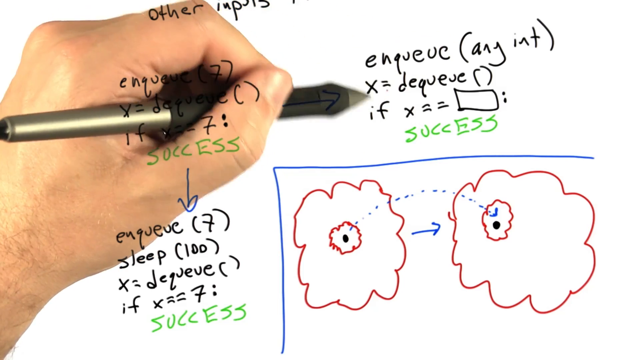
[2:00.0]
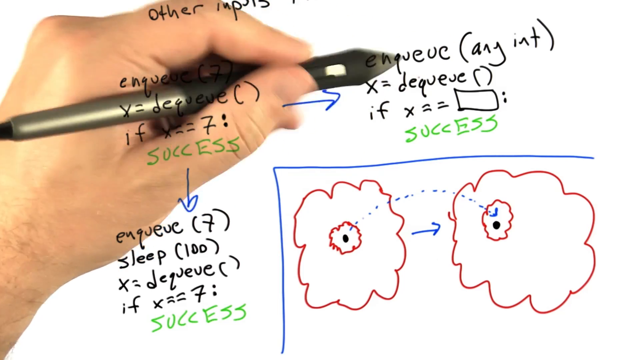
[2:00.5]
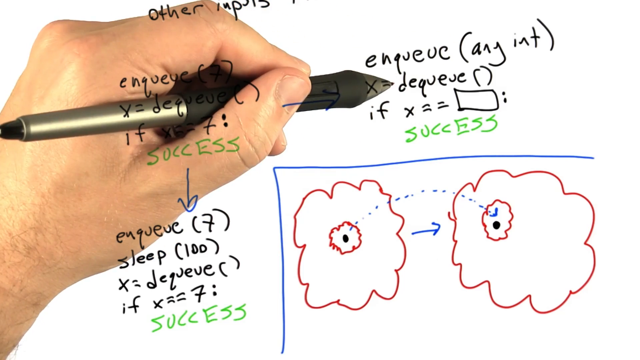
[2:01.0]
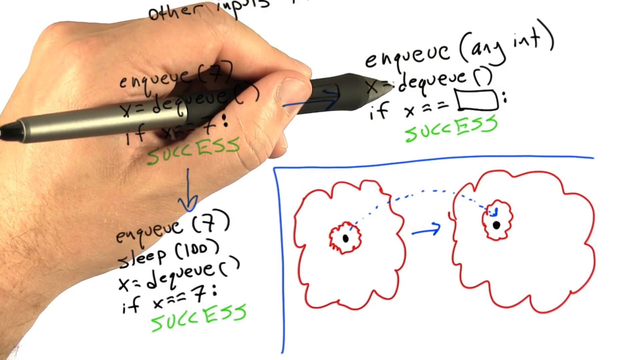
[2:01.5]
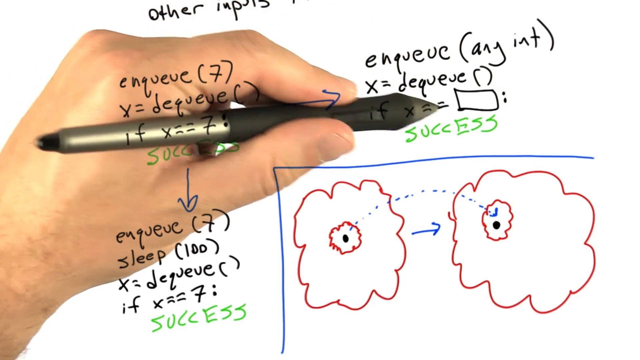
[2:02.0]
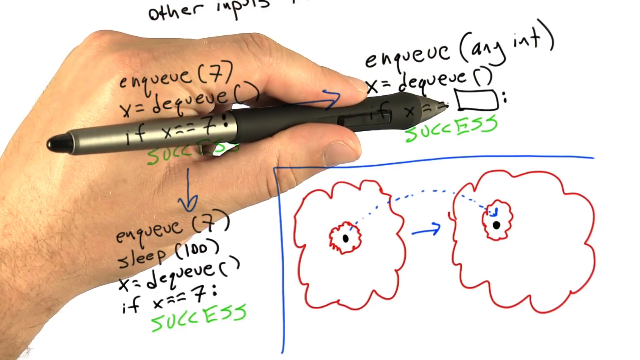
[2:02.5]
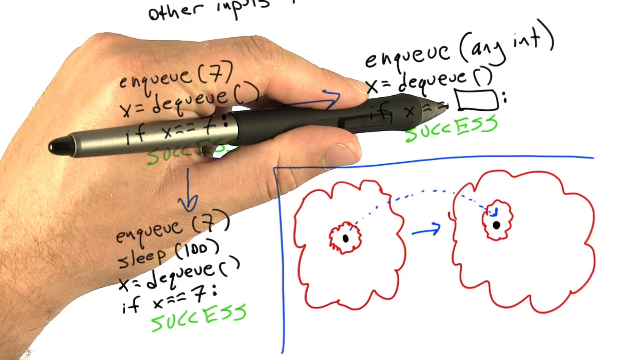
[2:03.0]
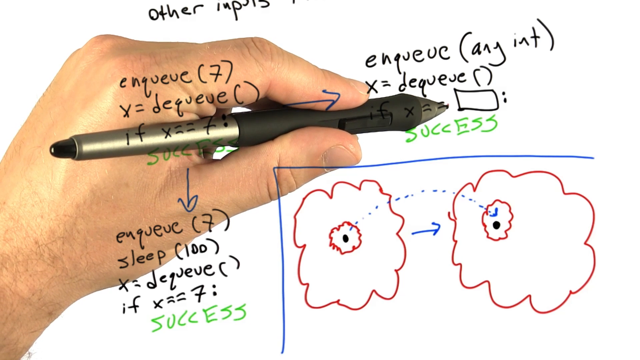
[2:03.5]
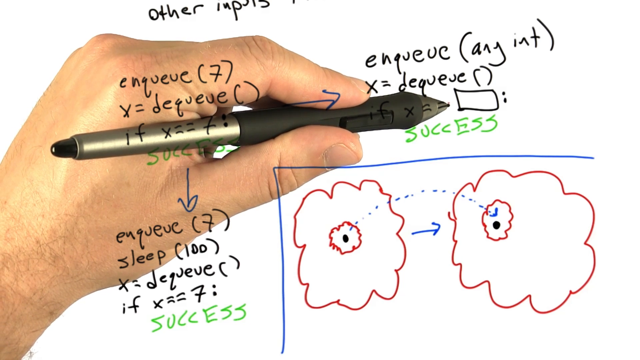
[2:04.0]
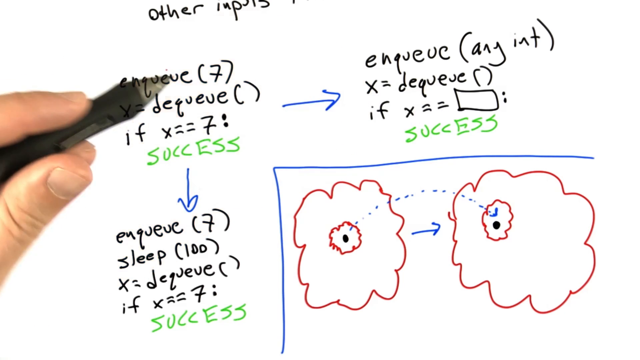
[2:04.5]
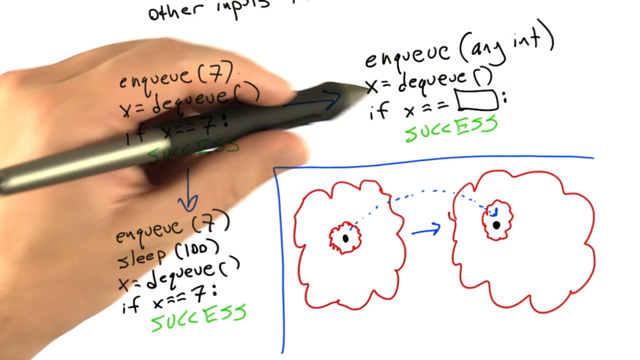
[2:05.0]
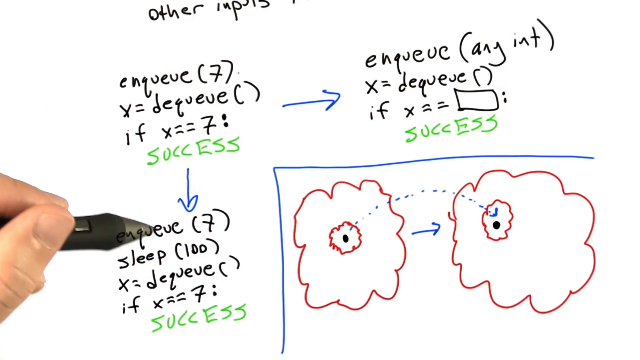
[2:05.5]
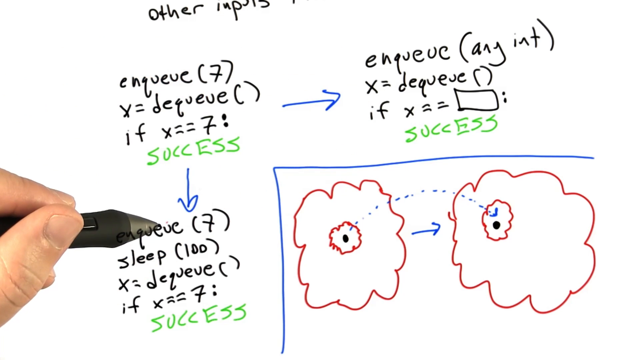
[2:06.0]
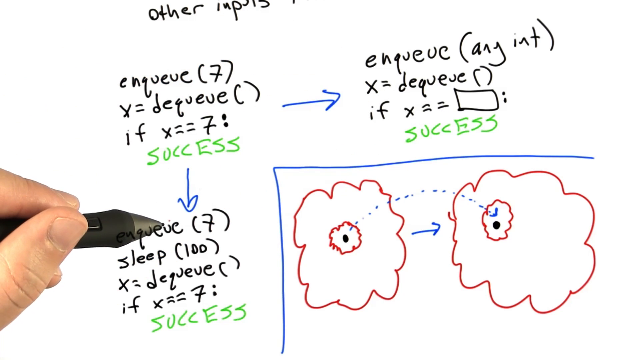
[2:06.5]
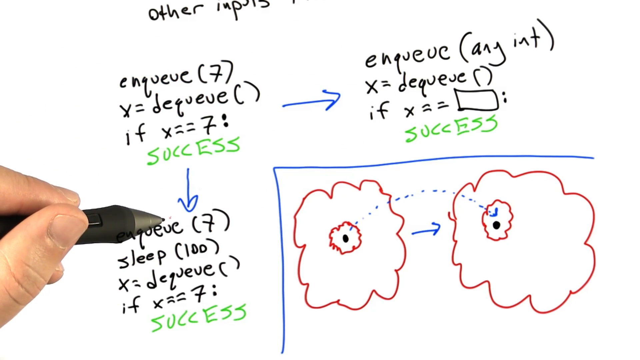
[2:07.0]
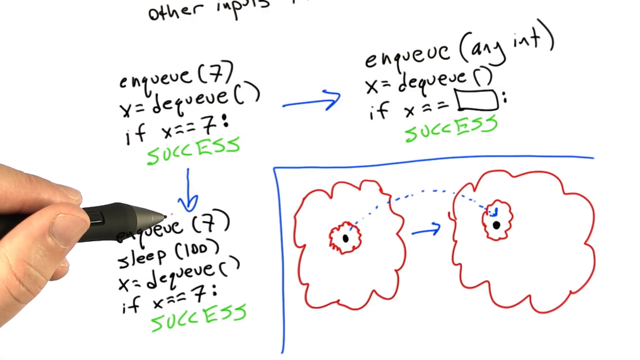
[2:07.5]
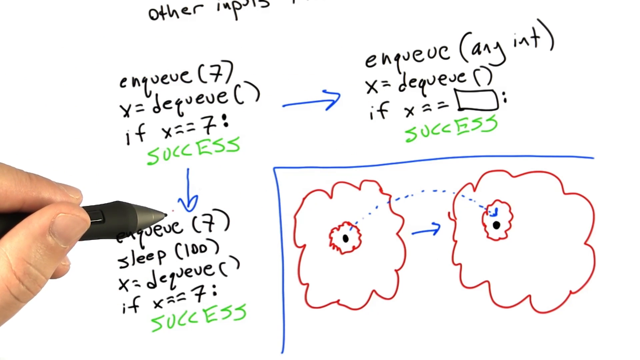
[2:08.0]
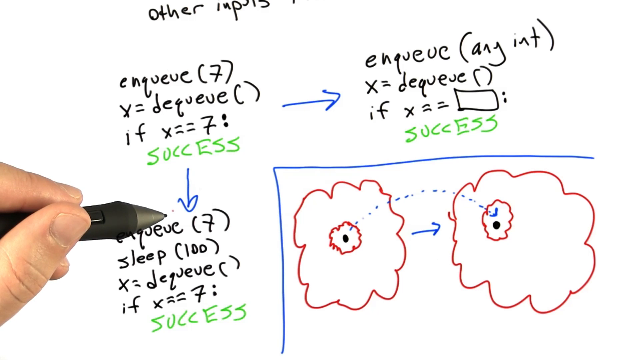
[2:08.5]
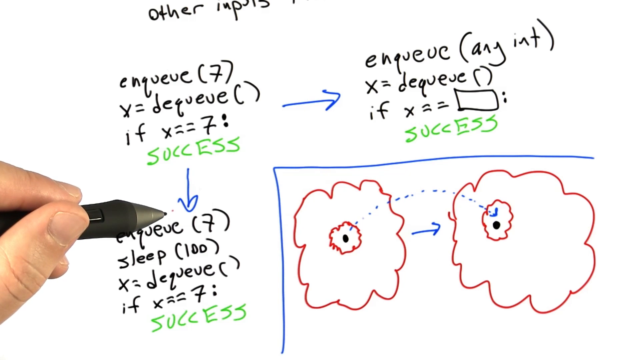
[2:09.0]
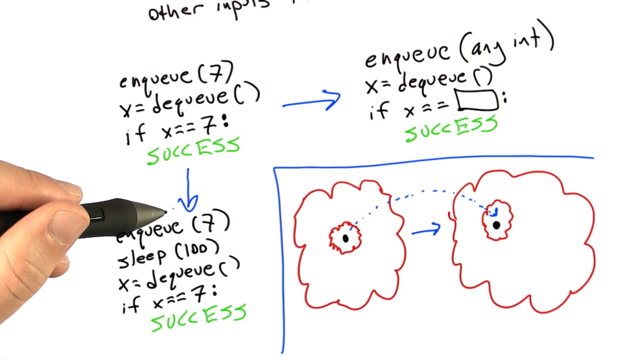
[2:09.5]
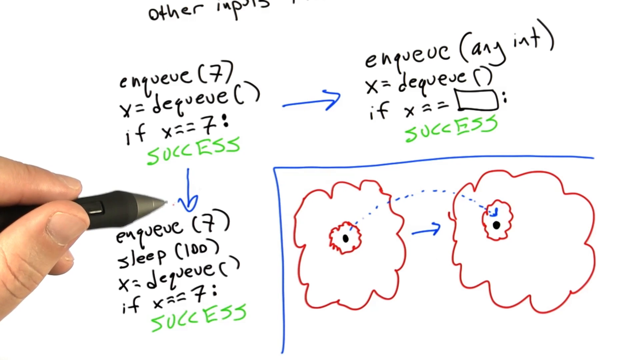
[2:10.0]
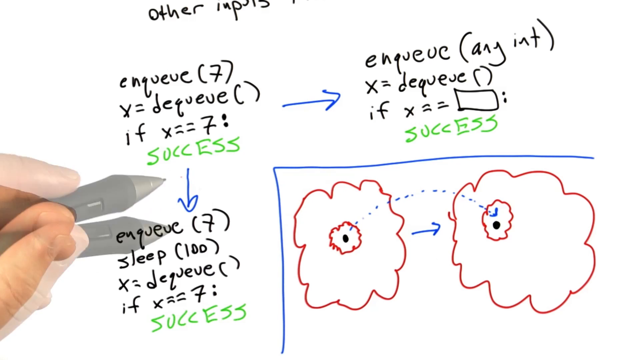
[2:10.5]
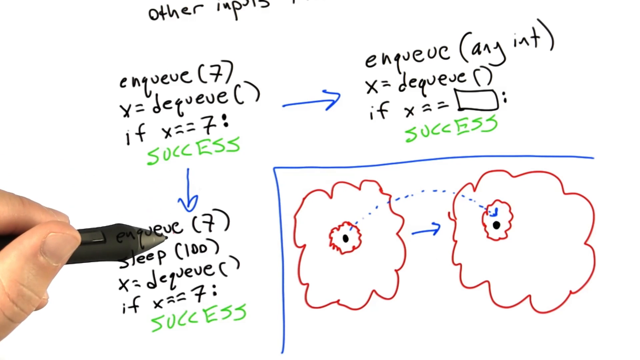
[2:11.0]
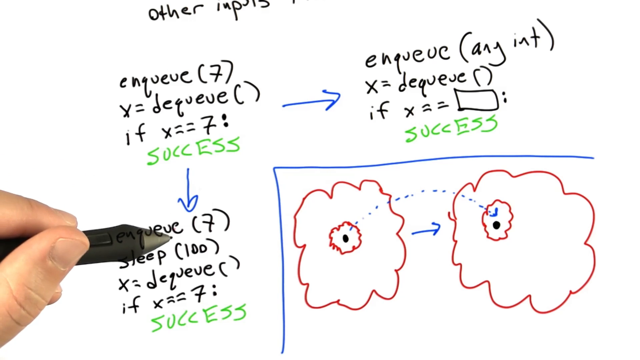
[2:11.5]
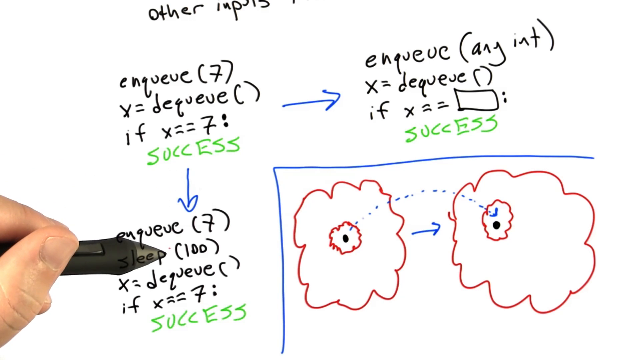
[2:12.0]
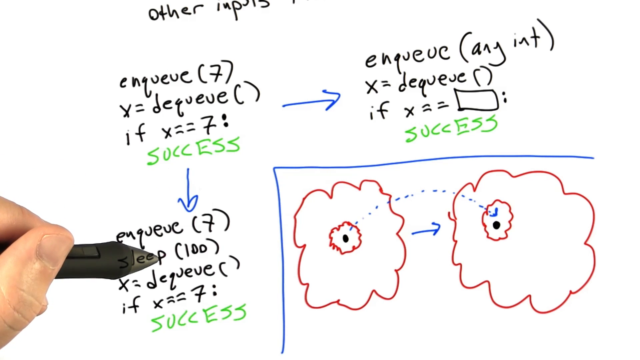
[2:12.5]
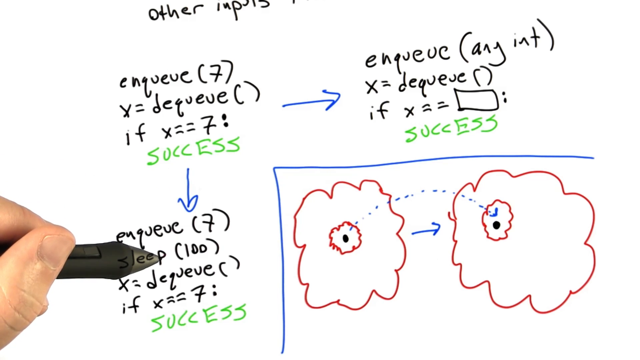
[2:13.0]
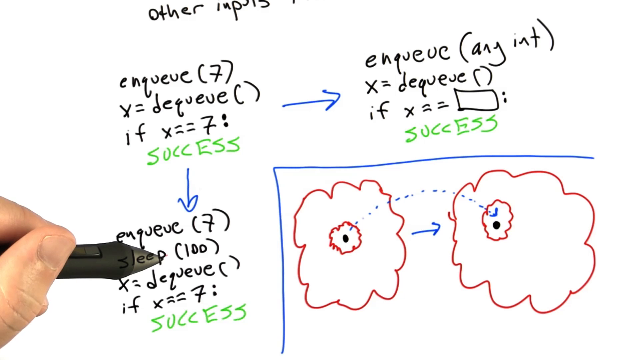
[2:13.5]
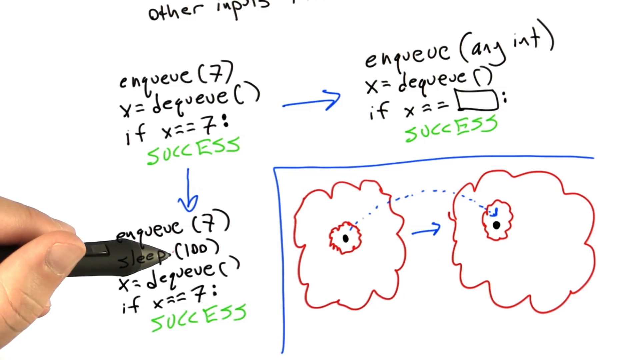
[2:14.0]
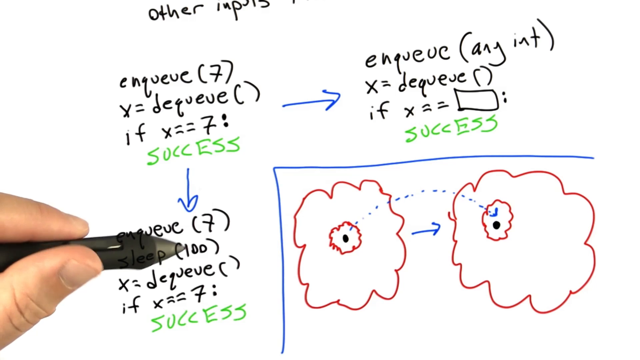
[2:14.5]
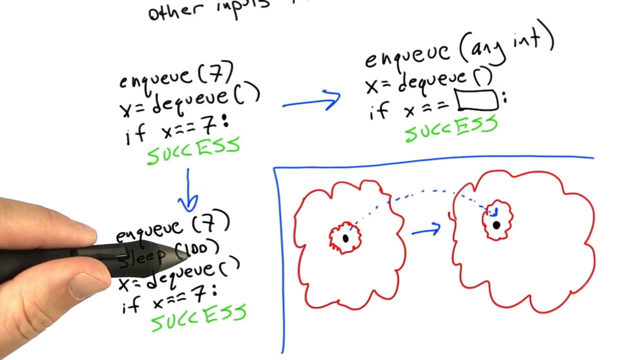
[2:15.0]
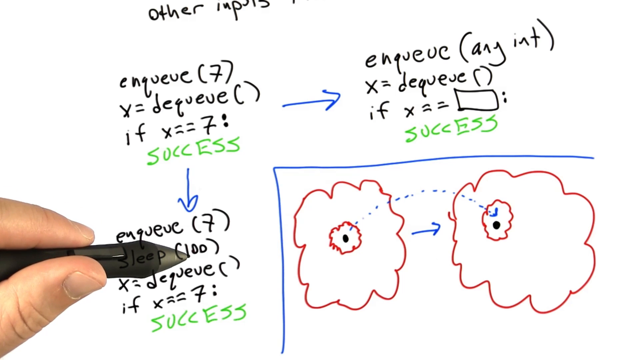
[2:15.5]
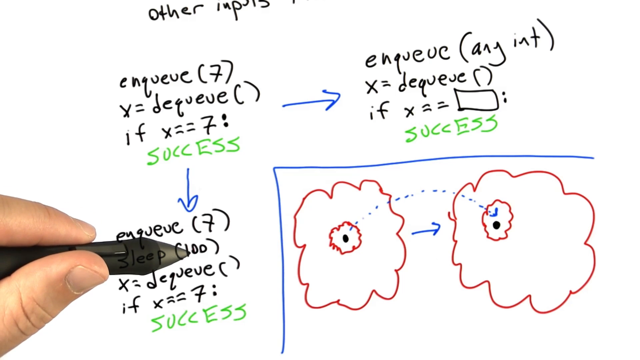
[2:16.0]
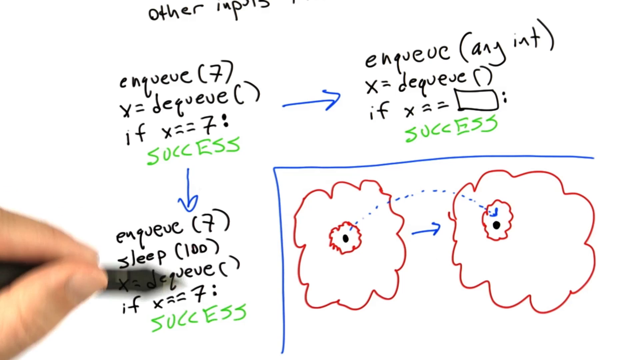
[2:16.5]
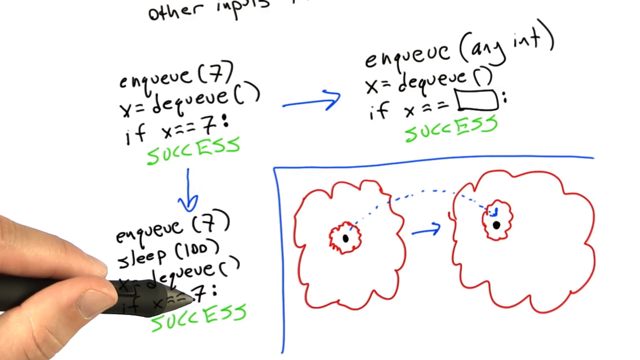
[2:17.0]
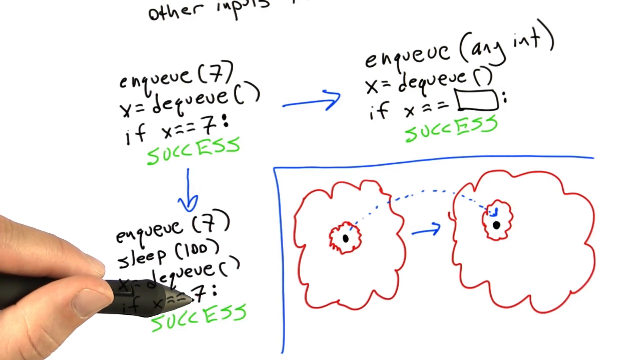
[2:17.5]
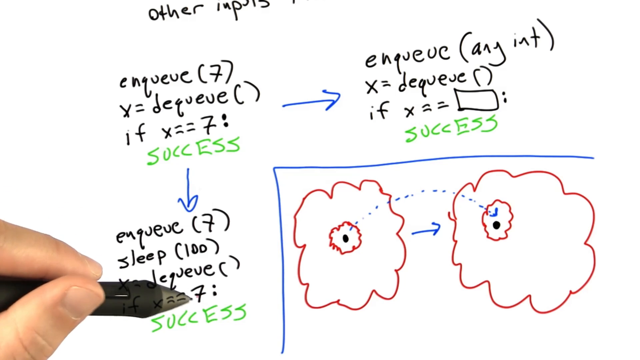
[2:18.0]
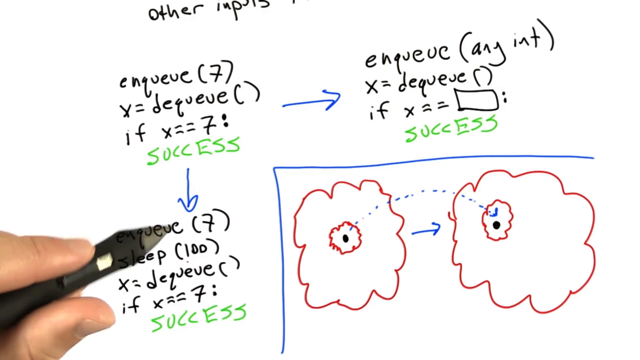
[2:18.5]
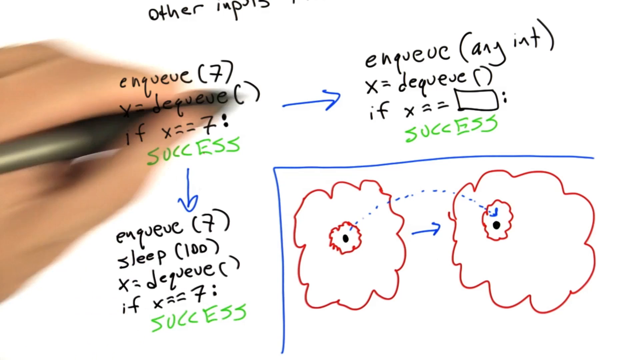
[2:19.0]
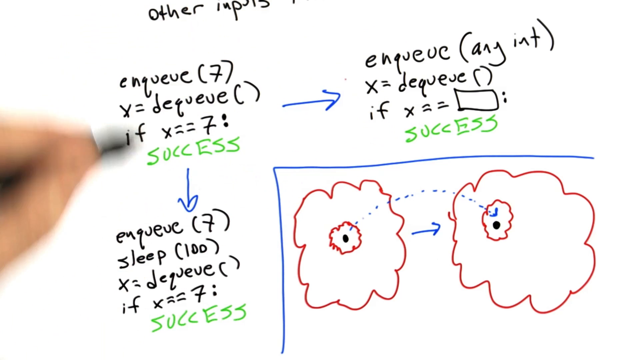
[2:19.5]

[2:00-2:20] The hand continues to hover over the second equation at the top, and the pen circles above certain parts of it without writing. The pen points to a rectangle; the sequence reads the letter X, equals, equals, a rectangle, and a double dot. The hand swiftly moves back to the first equation and points at the number 7 again, then swiftly moves to the second equation and then to the bottom equation. It hovers over the bottom equation, with the pen pointing out the number 100 written inside brackets, then moves down in this equation to the number 7 again. The hand swiftly moves up to the second equation, back to the first, and back down. The hand's movement seems to describe how all three equations are interconnected.